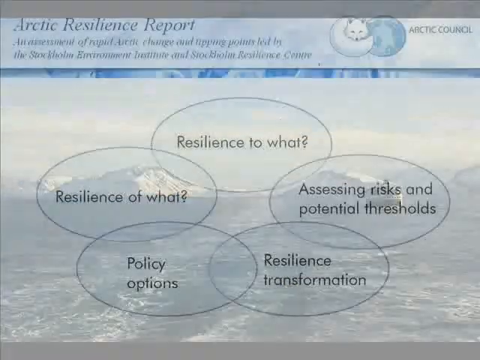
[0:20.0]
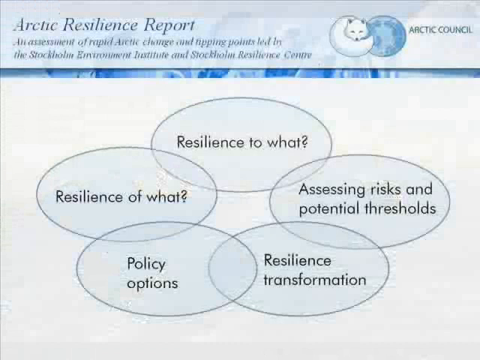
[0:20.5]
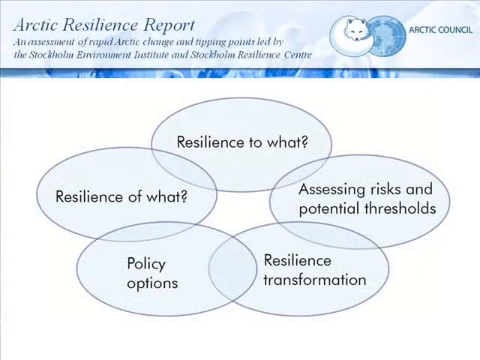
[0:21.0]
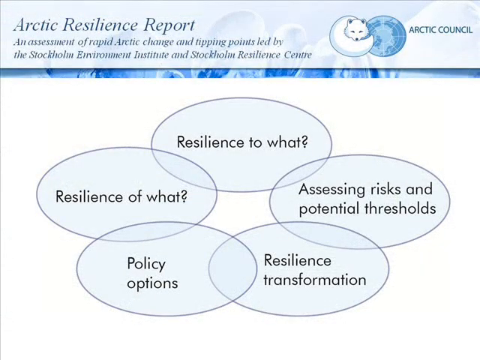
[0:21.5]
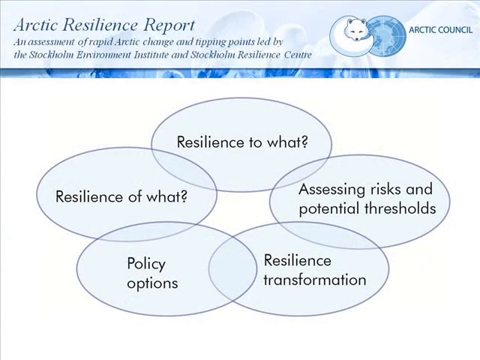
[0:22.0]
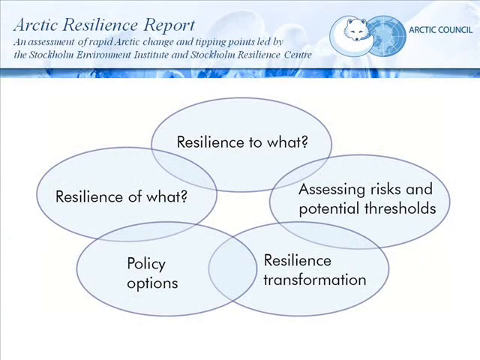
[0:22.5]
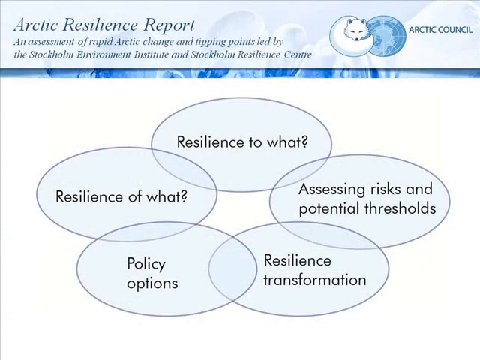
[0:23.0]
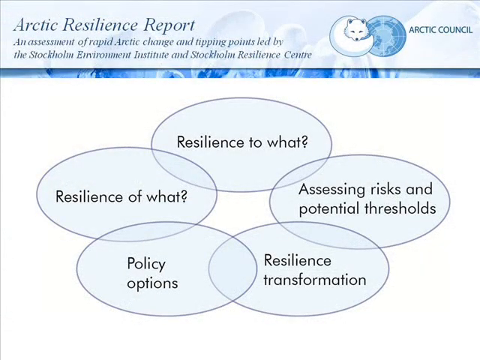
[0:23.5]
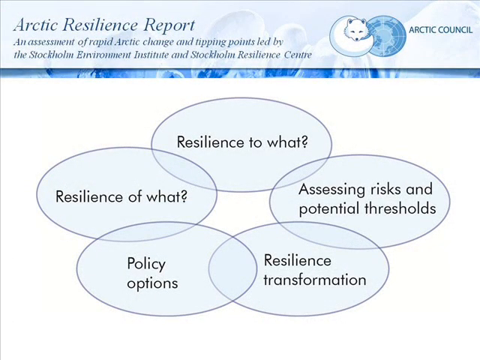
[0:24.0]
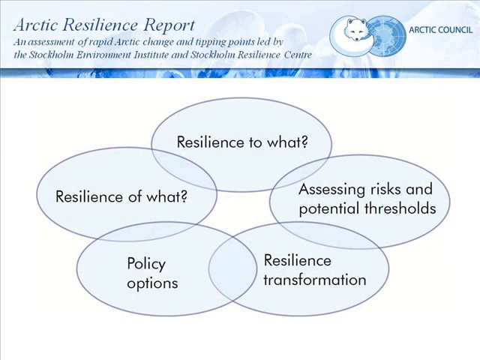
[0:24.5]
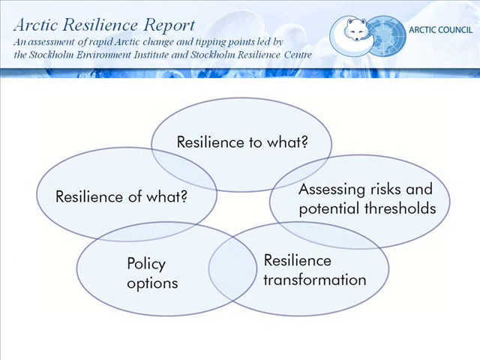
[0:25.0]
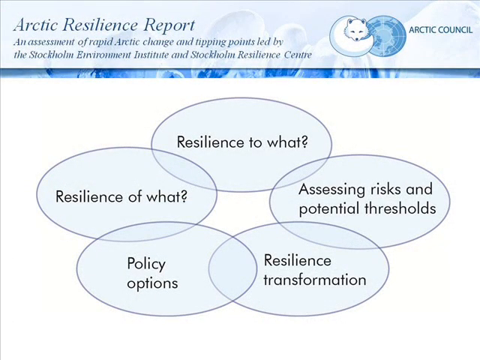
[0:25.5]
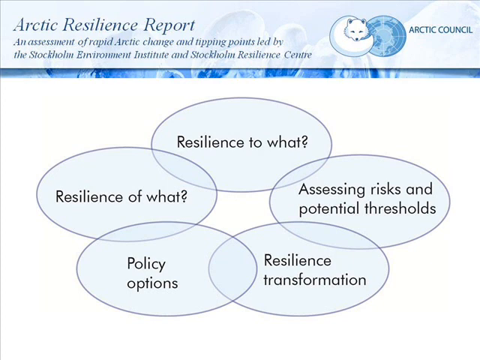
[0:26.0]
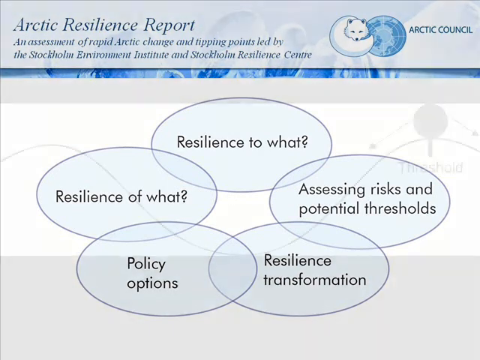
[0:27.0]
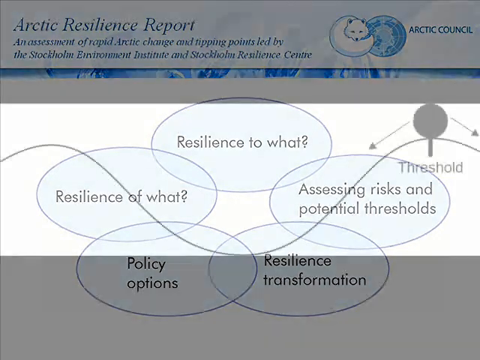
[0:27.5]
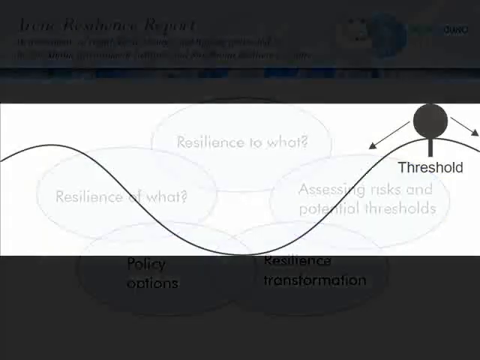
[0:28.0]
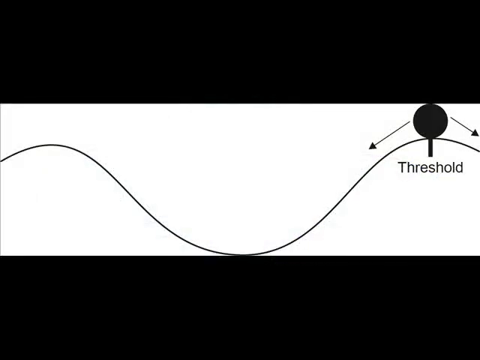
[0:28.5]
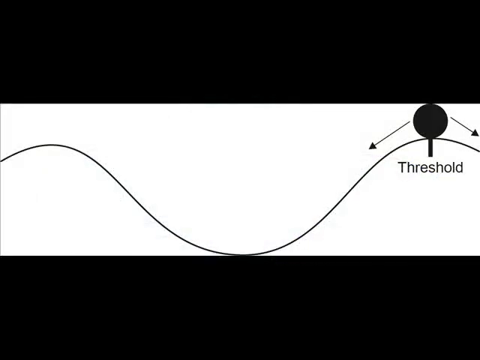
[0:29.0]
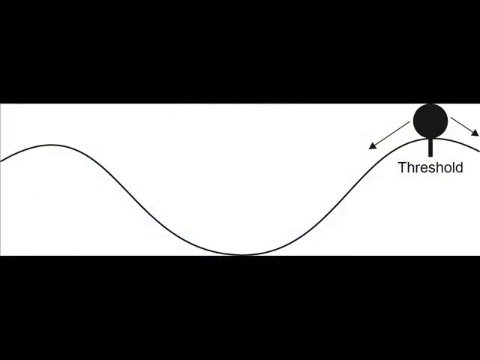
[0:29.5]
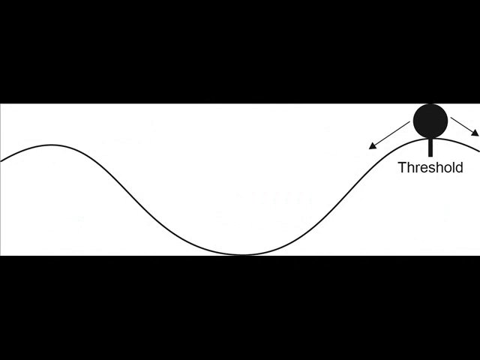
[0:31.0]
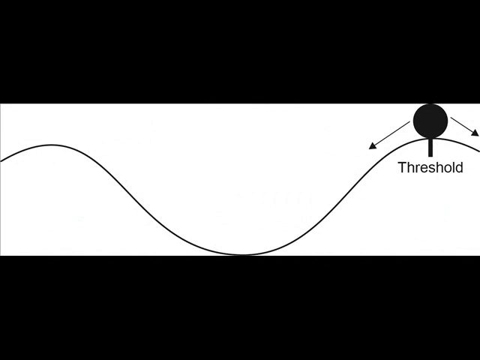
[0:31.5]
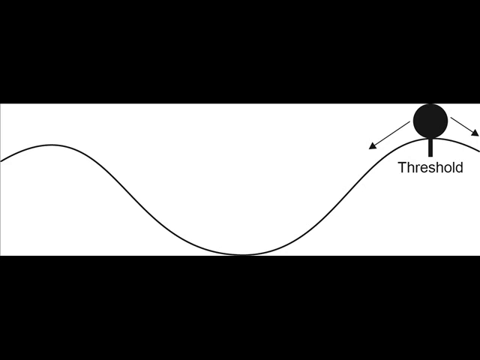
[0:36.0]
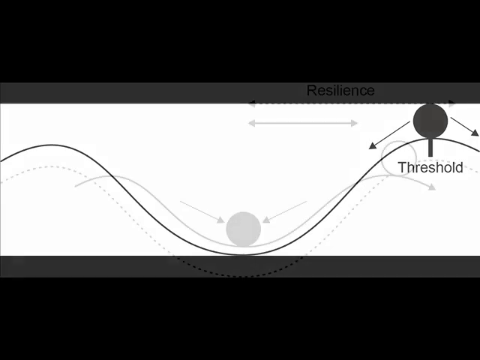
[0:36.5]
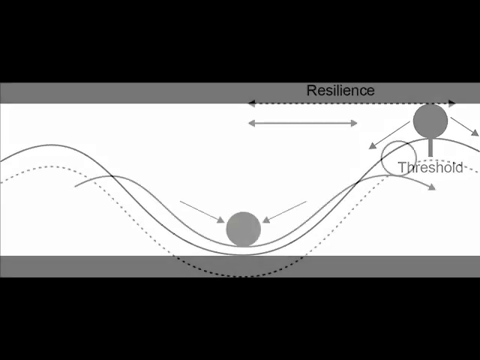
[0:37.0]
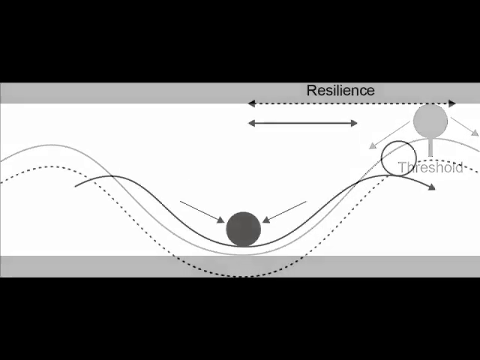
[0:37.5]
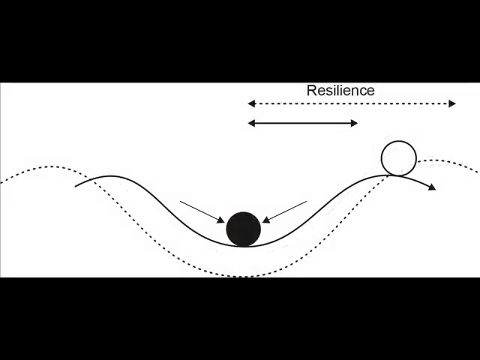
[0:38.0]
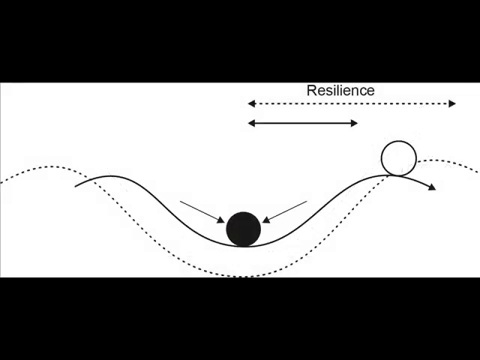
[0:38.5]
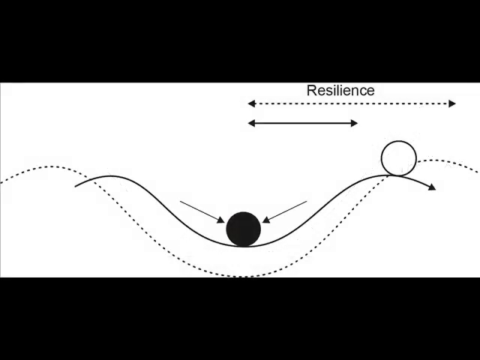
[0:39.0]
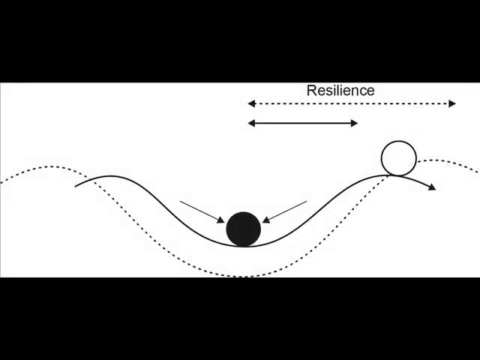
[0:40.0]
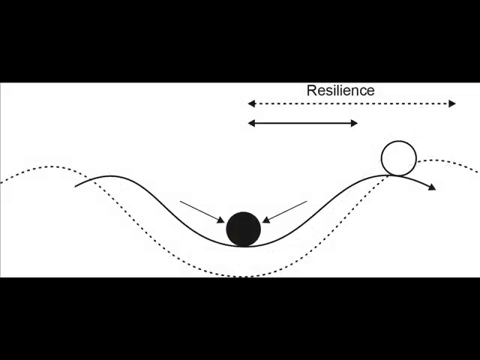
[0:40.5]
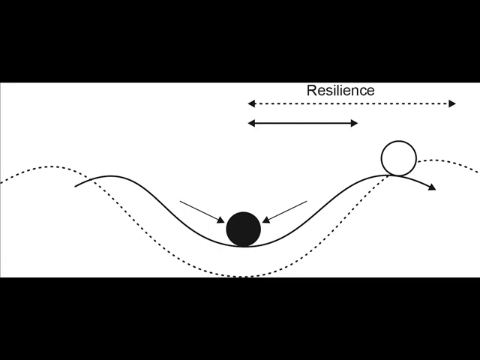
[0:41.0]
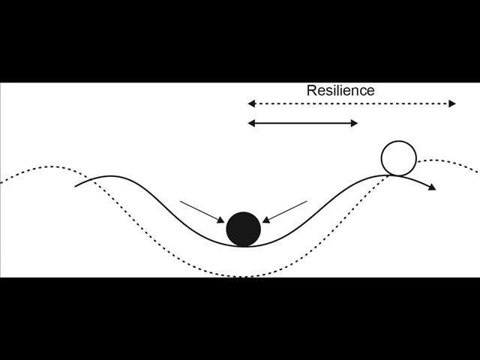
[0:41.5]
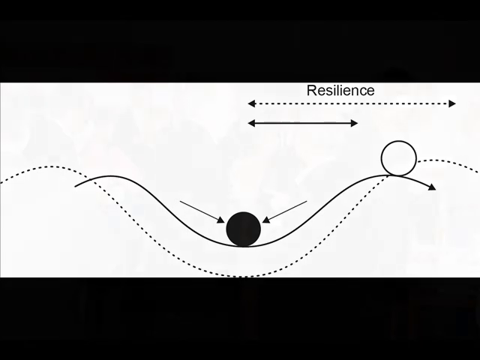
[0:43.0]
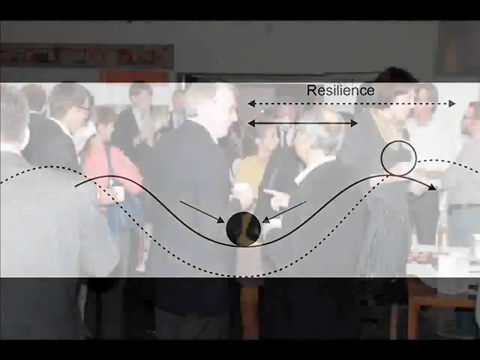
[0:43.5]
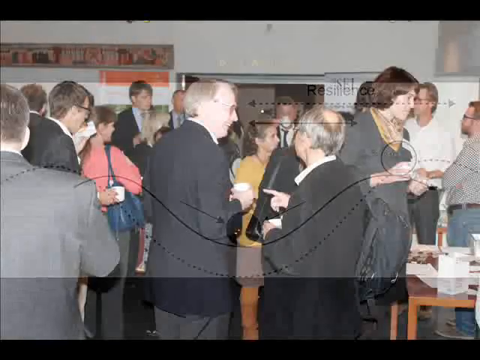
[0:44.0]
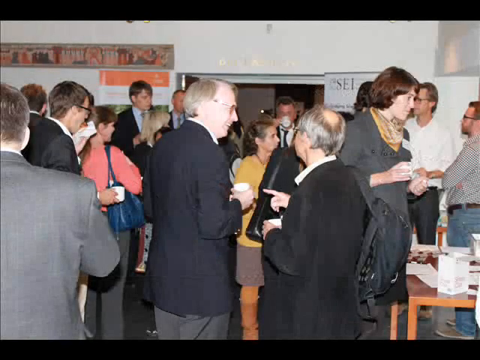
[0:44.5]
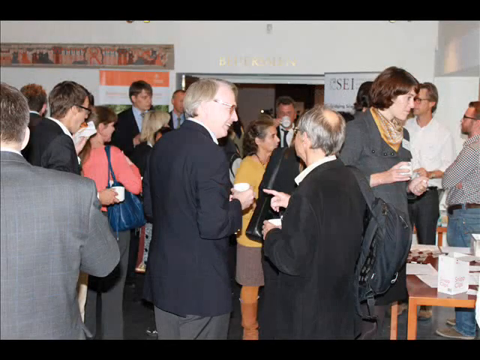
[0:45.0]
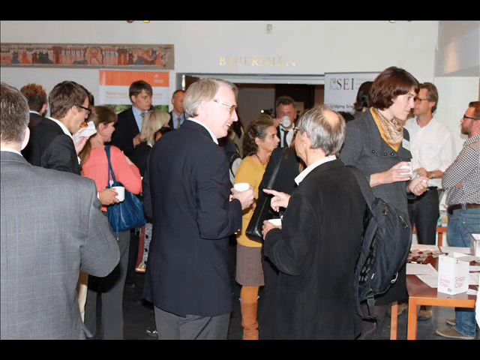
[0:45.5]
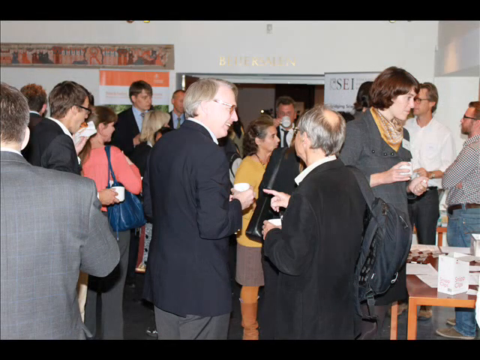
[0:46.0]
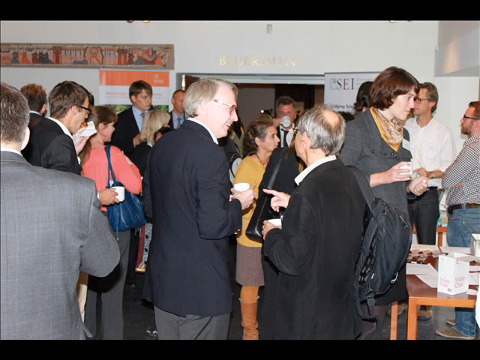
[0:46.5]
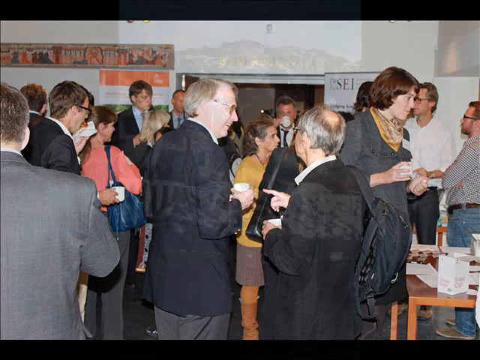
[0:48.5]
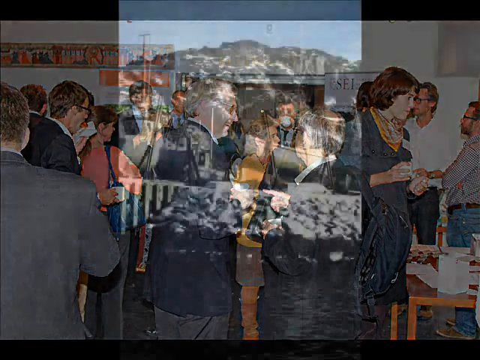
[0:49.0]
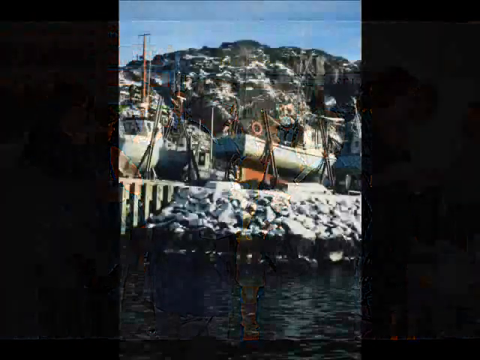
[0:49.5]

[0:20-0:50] A slide reads "Arctic Resilience Report," with "Arctic Council" at the top right. A Venn-like diagram shows five overlapping bubbles arranged in a star pattern. Another diagram shows a black line labelled "threshold" with a ball on top of it and arrows pointing left and right; the ball is on the right-hand side. A further diagram shows the same line plus an additional dotted line with a white ball on the right, while the black ball is on the first line with arrows pointing towards it. At the top, "resilience" appears with the dotted line, and underneath is a shorter black line with arrows on the other side. The next slide is a photo of 20 to 30 people; two in the foreground are old and wear glasses, and one of them is smiling. A woman on the right smiles and looks to the right. It looks like some kind of meeting or event.